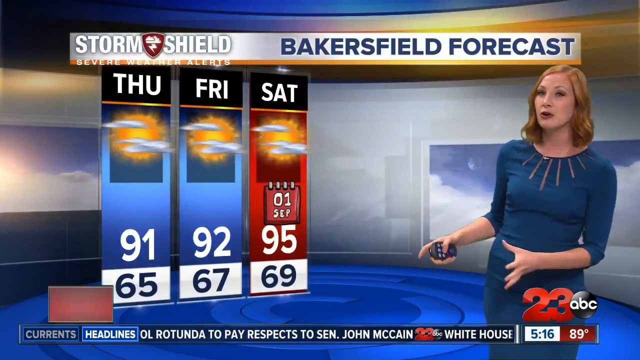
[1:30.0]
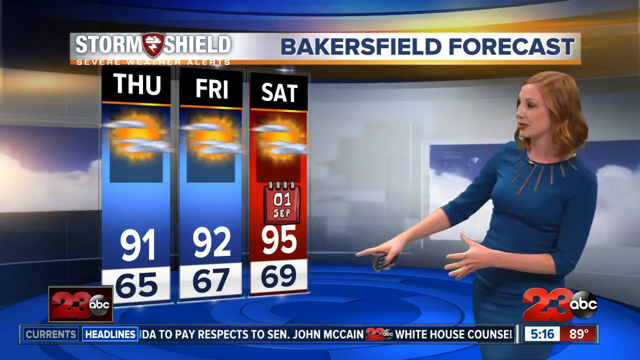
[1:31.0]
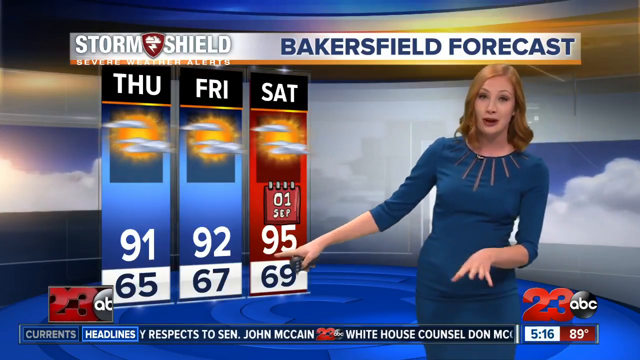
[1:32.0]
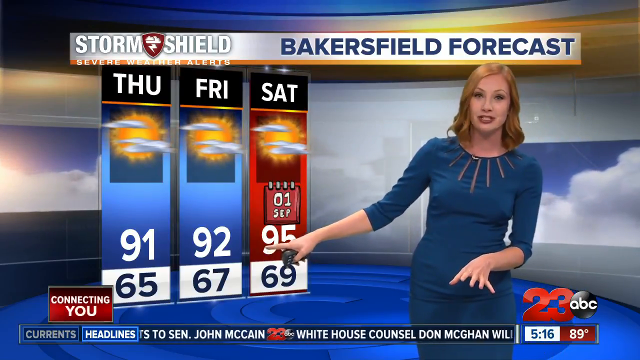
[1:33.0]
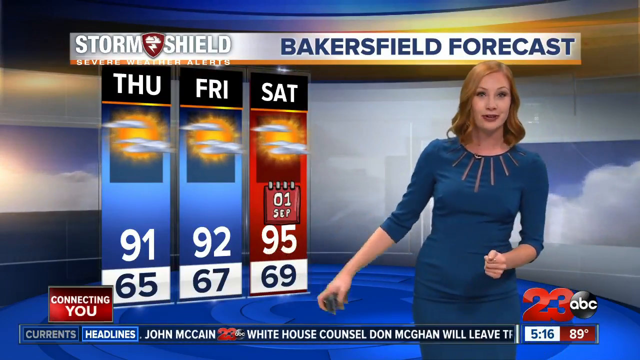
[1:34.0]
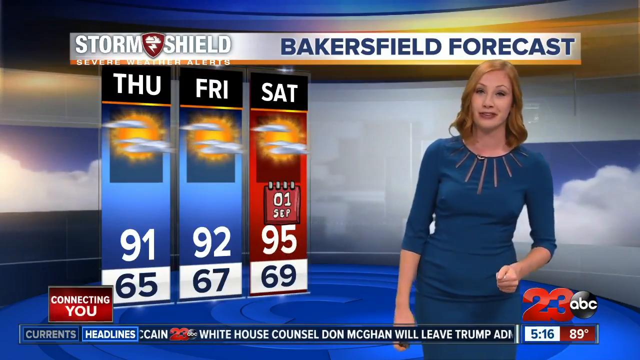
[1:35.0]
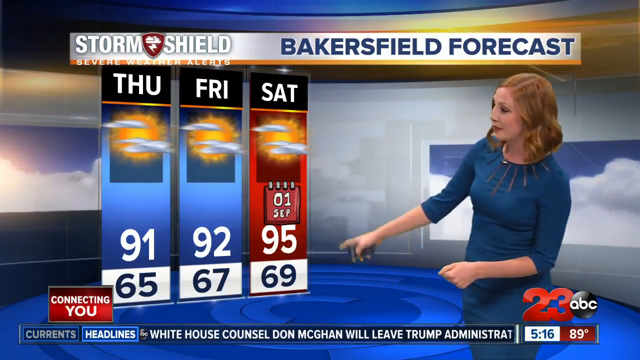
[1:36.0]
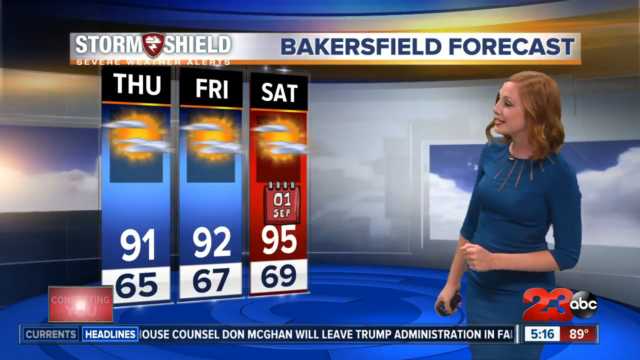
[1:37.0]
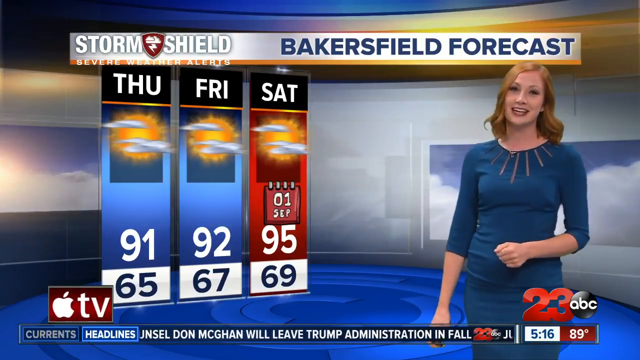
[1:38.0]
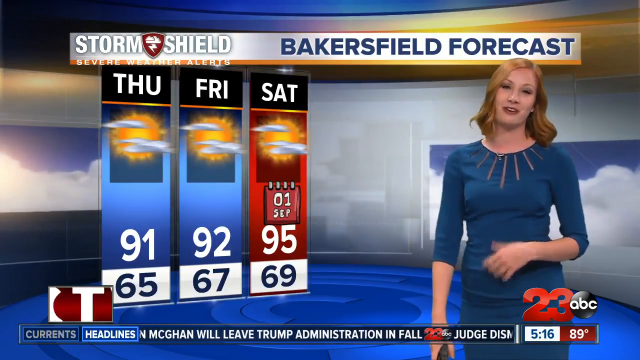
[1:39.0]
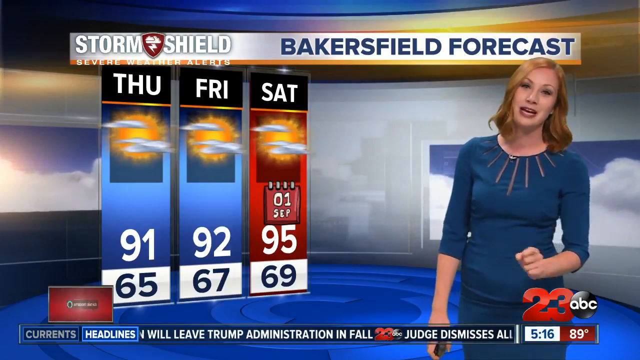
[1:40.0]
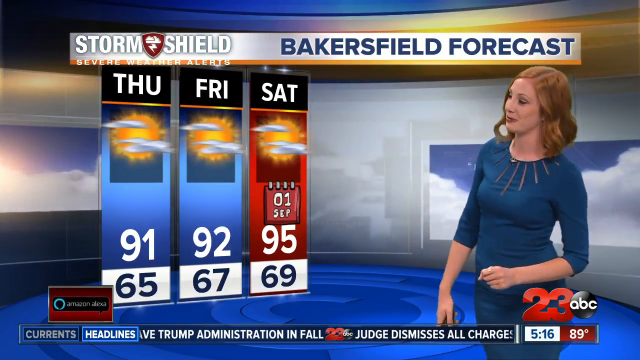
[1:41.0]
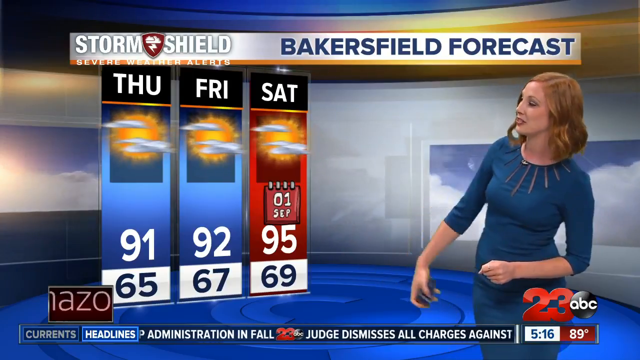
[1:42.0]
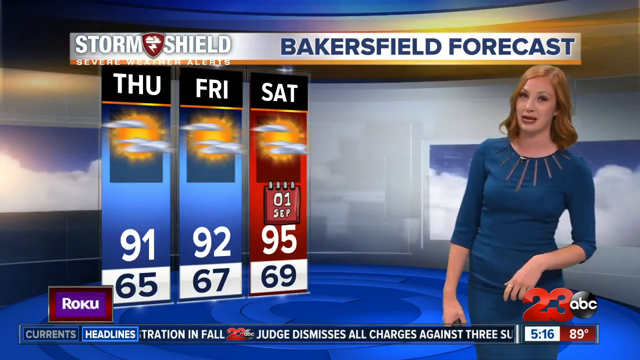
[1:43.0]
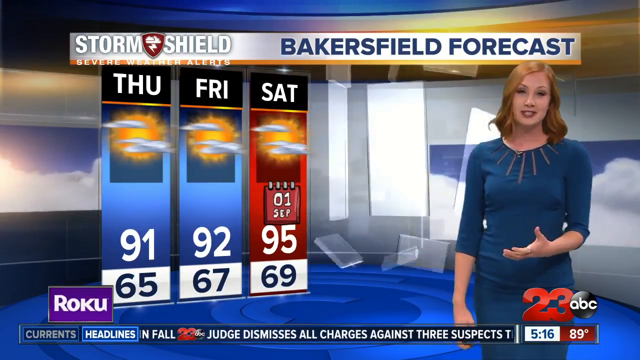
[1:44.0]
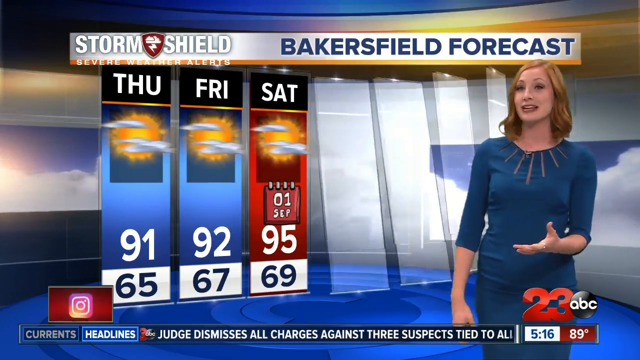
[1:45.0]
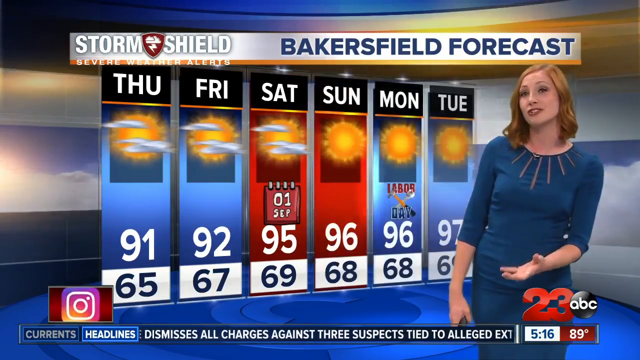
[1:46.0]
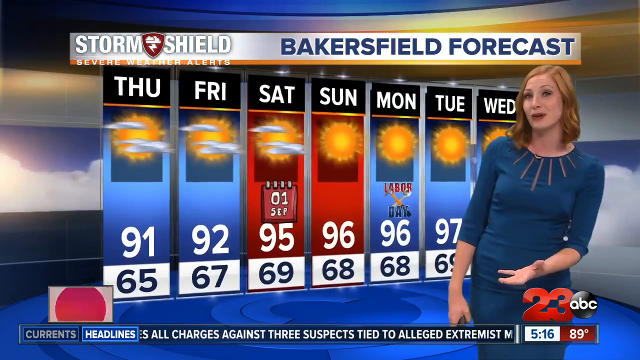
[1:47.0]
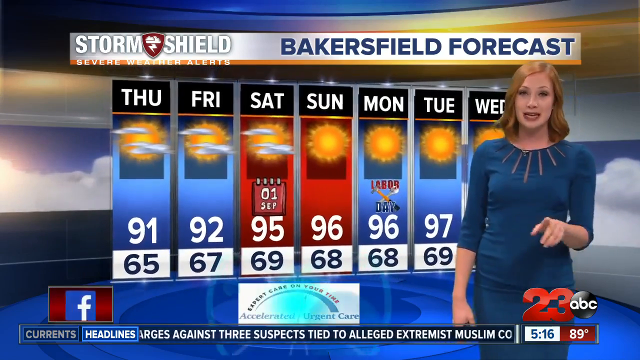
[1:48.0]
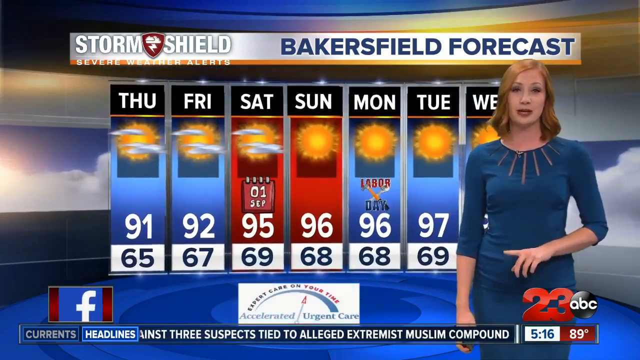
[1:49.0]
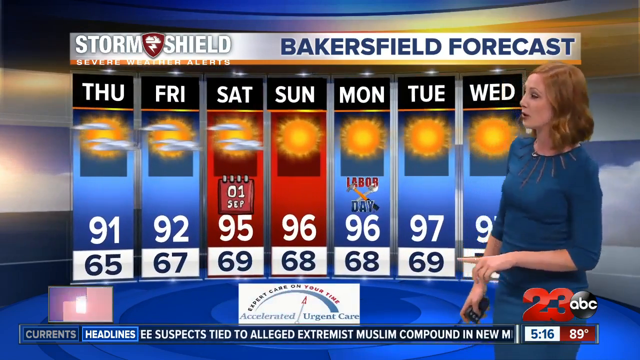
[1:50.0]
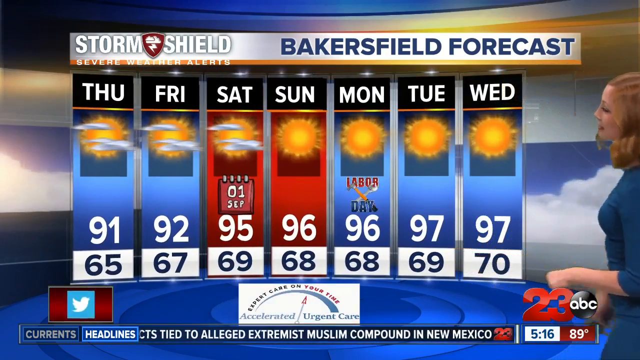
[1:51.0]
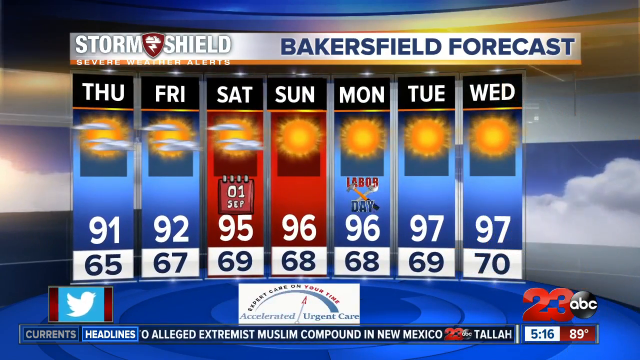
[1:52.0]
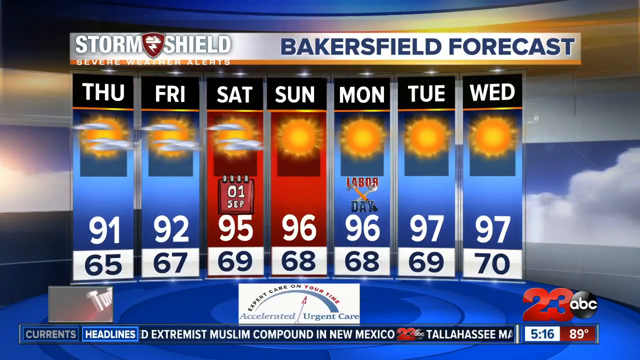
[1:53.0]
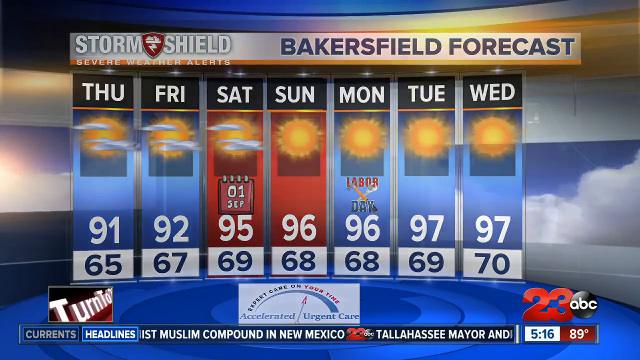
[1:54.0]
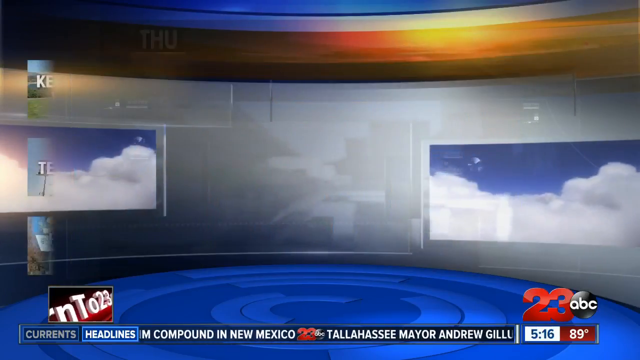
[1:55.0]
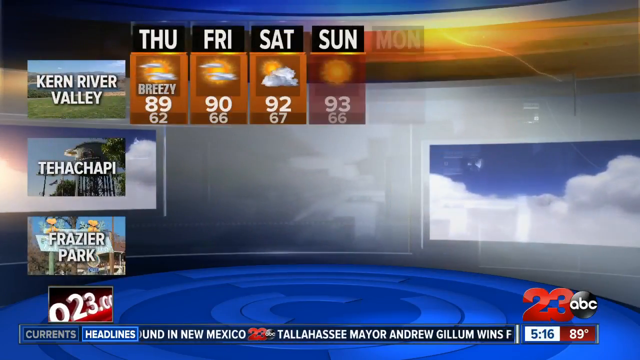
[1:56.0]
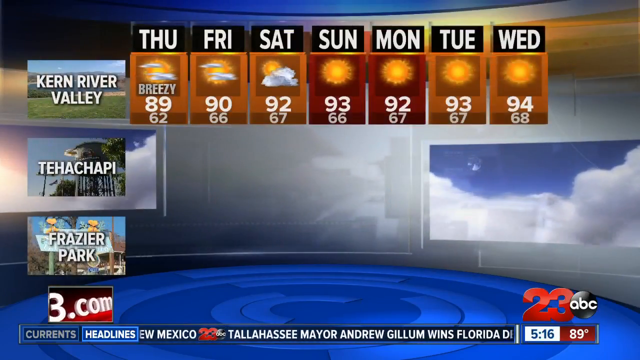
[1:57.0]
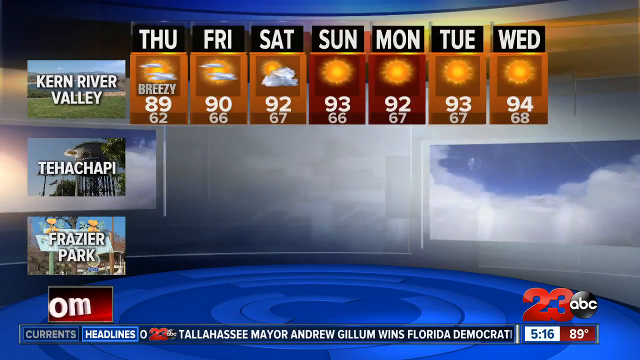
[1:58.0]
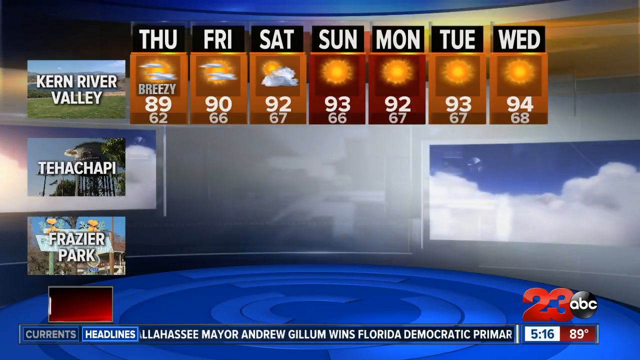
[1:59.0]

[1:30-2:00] A female news reporter with long blonde hair, wearing a blue dress and holding a remote in her right hand, stands next to a large screen display in a news studio. The display shows the Bakersfield forecast for Thursday, Friday and Saturday with different numbers, and she points at it as she reports. The screen changes to show the forecast for Thursday, Friday, Saturday, Sunday, Monday, Tuesday and Wednesday. The reporter moves away from the screen, out of sight. The screen then changes to show three places, Kern River Valley, Tehachapi and Frazier Park, with different weather conditions and numbers throughout the week, and the display keeps zooming in and out as it shows the weather in the different cities.